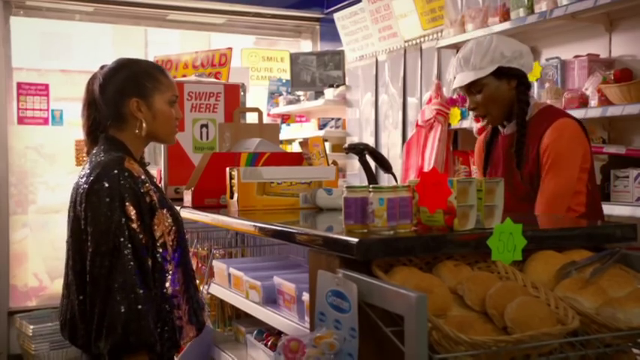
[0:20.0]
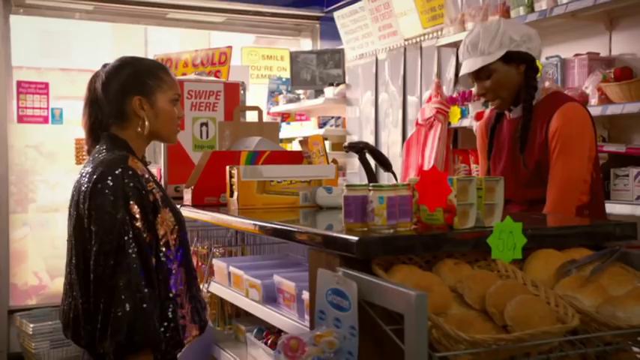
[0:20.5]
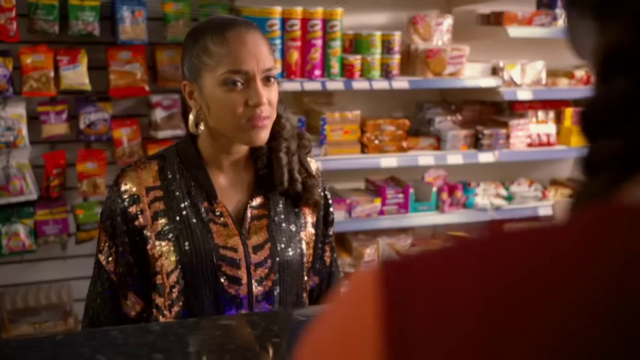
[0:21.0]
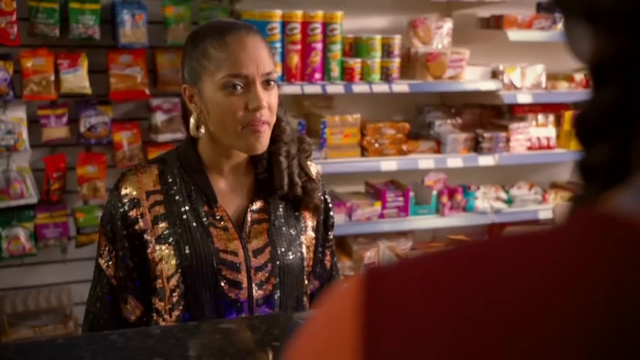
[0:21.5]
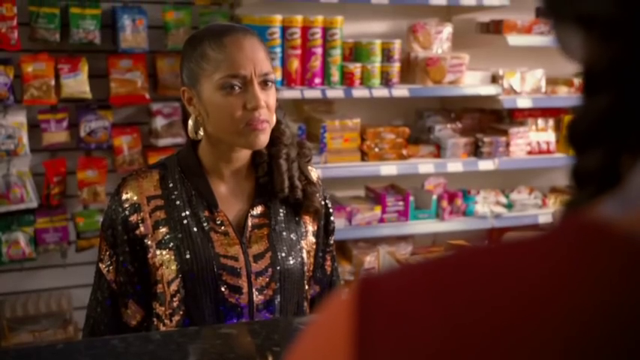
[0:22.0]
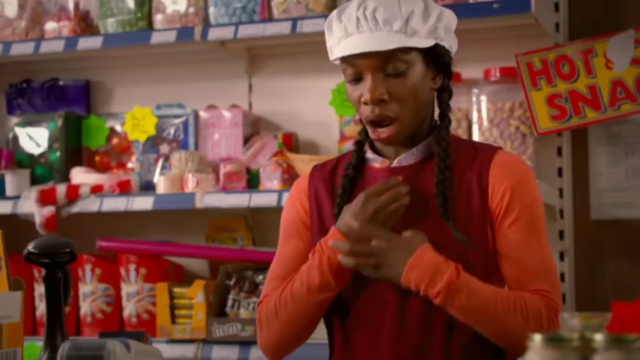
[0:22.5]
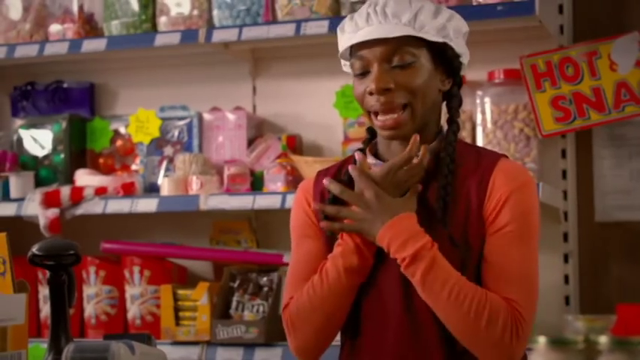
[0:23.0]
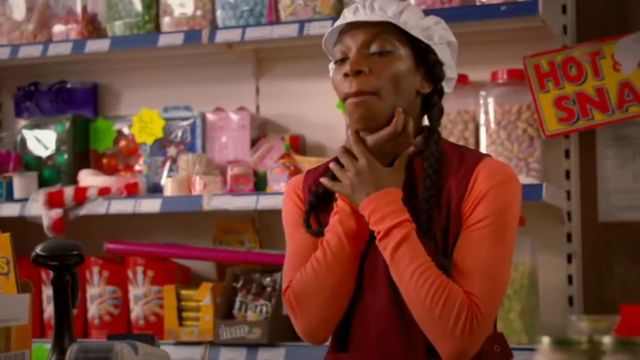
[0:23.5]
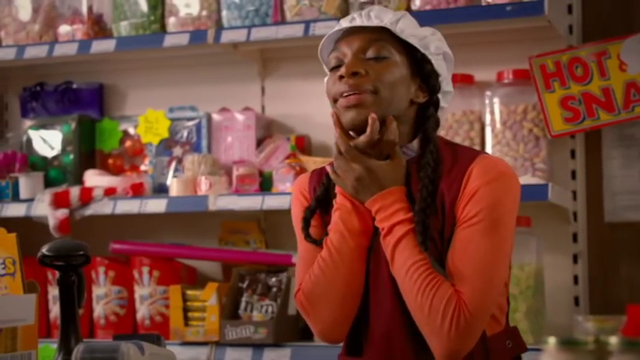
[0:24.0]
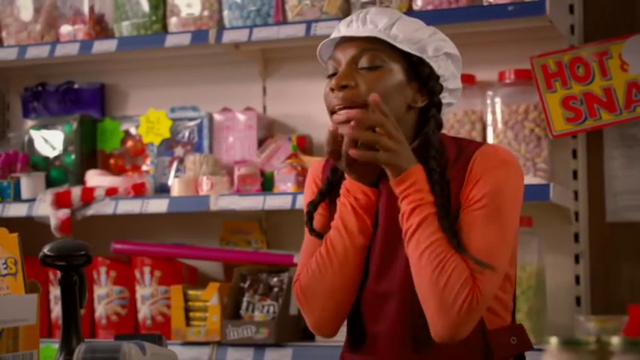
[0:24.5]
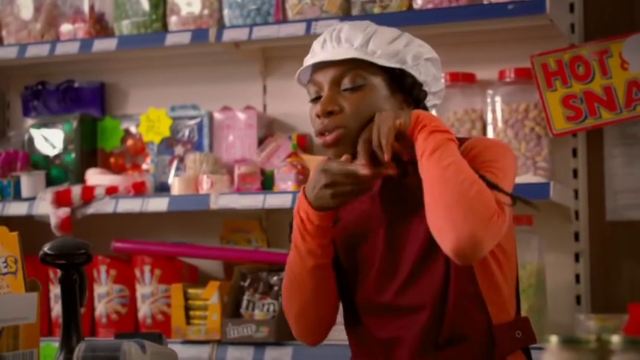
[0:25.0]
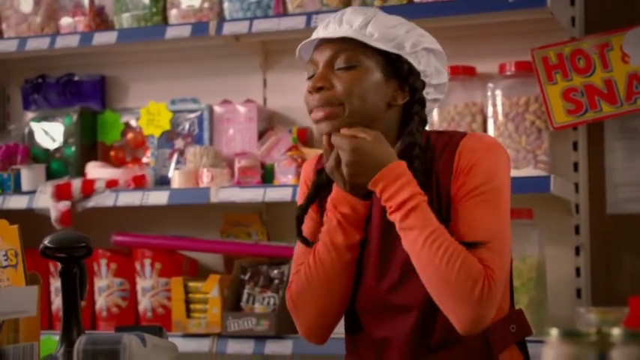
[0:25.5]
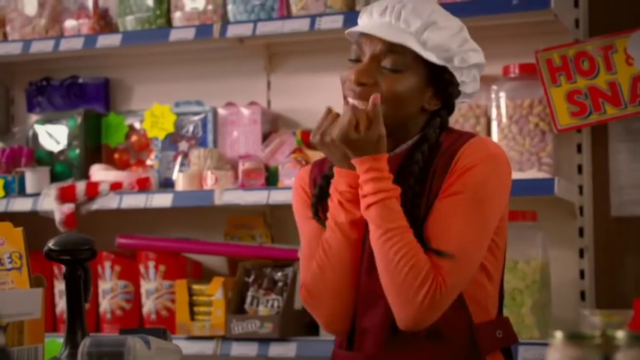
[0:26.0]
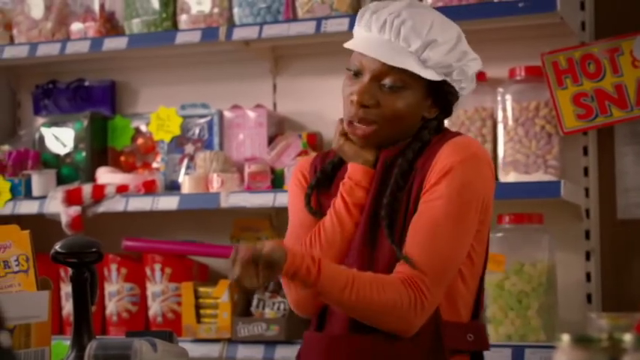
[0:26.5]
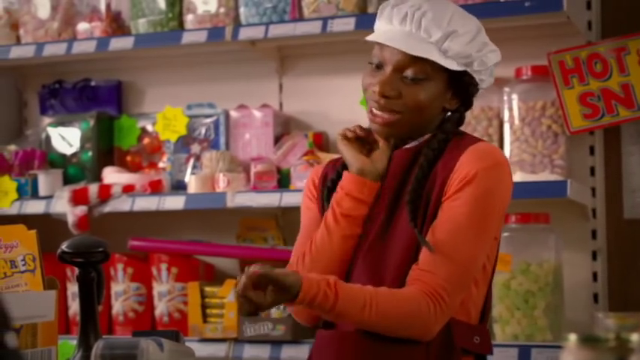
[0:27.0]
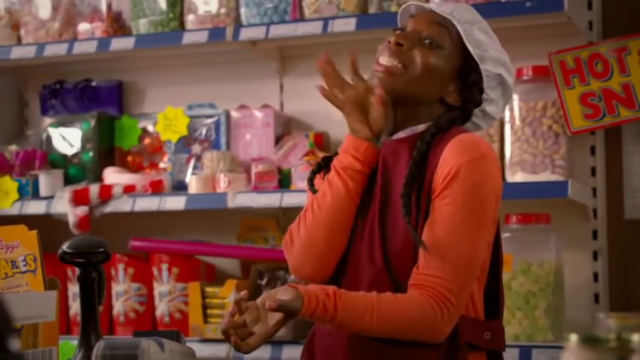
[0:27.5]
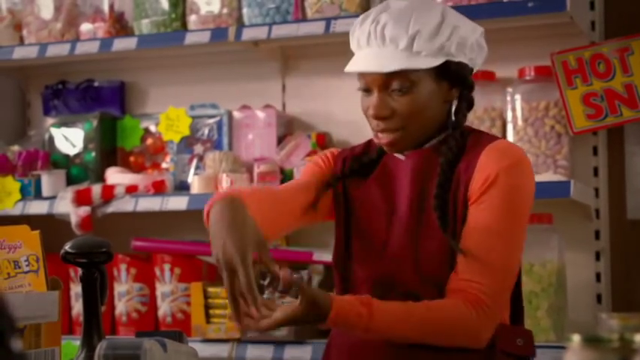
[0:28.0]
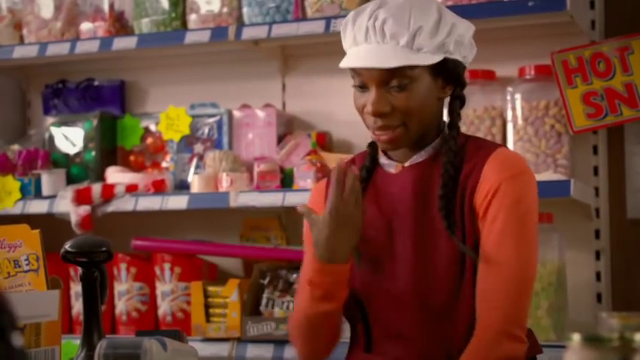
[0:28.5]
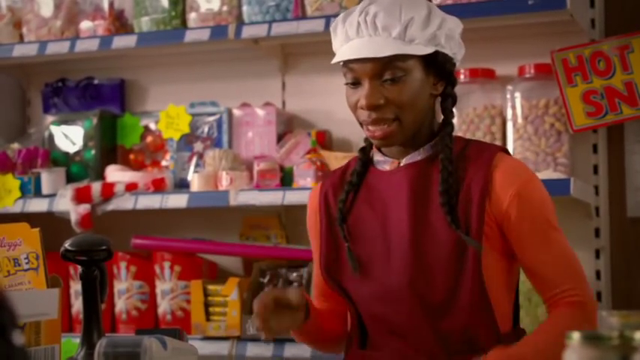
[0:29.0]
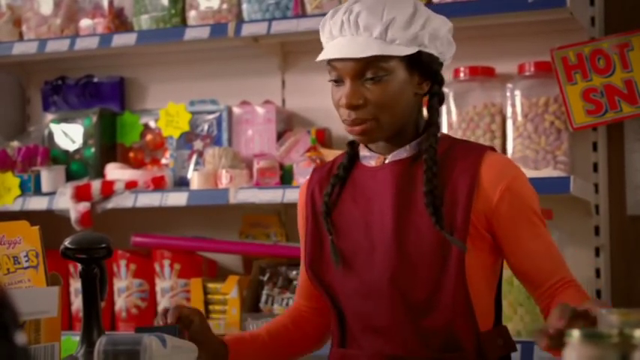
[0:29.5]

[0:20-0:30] A Black woman who looks American, with long, curled black hair, gold earrings and a black and gold shirt, is standing in front of the table. Behind her are food packages, sweets and cookies; some shelves are stocked and some are empty, and the background of the shelf is white. She is talking to another Black woman, who wears a white cap, has long black hair in dreadlocks, and wears an orange shirt with a red apron on top. Behind her are food stocks on shelves, and on the right is a board that says "rot". The woman talks to the other woman while actively using hand signs to explain what she is saying.